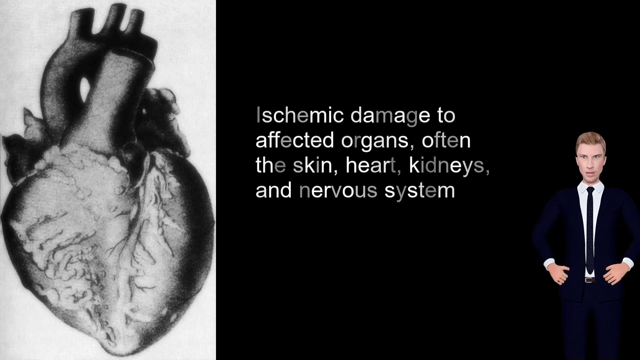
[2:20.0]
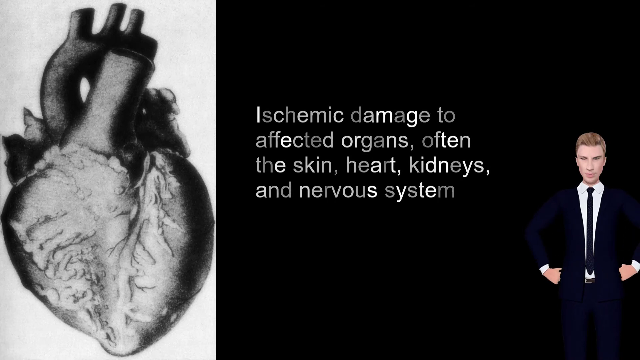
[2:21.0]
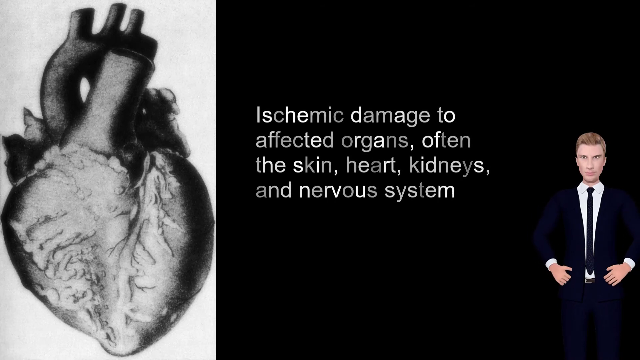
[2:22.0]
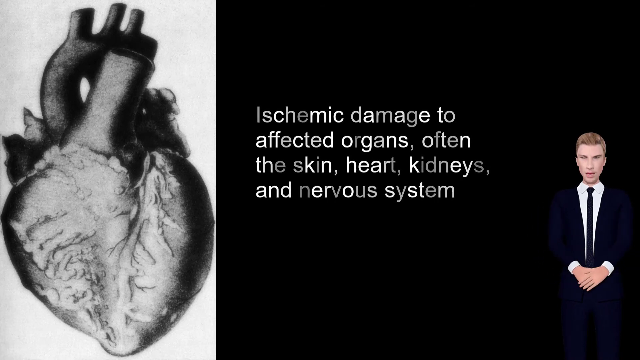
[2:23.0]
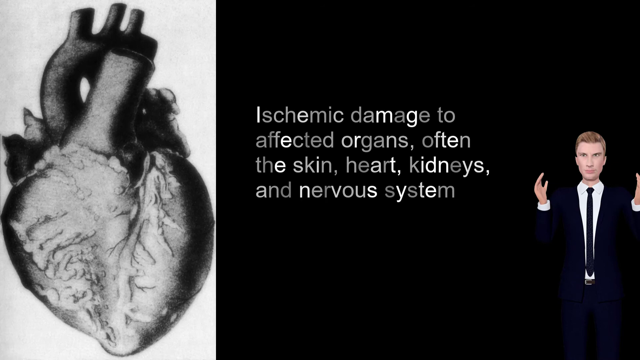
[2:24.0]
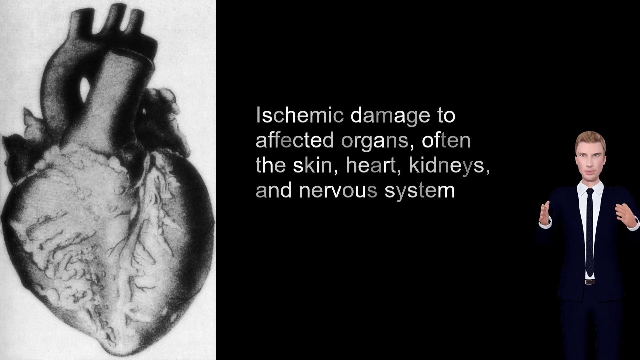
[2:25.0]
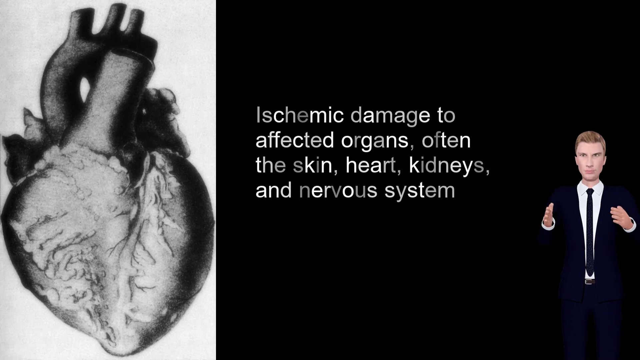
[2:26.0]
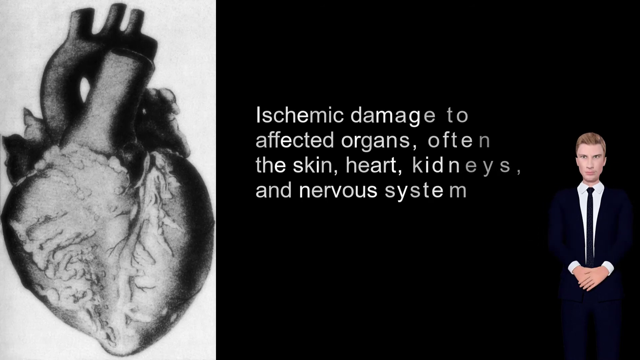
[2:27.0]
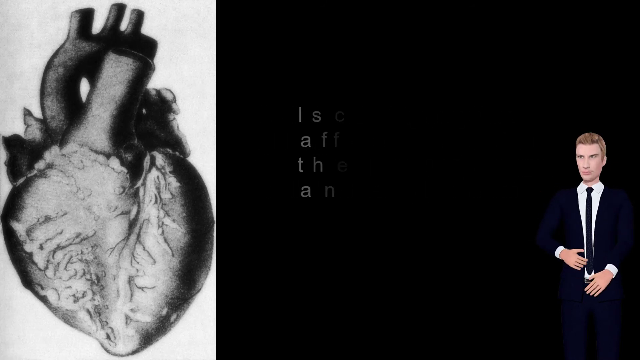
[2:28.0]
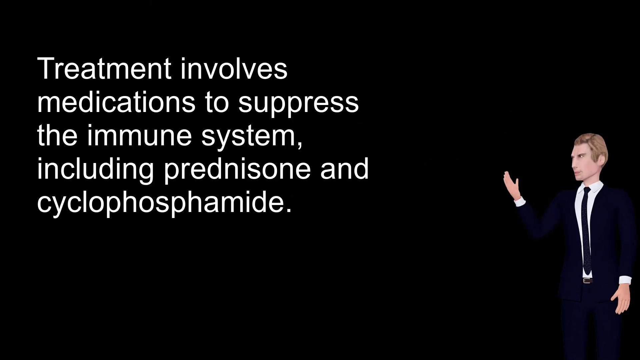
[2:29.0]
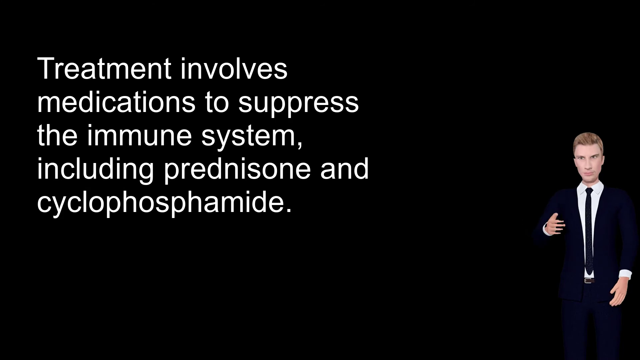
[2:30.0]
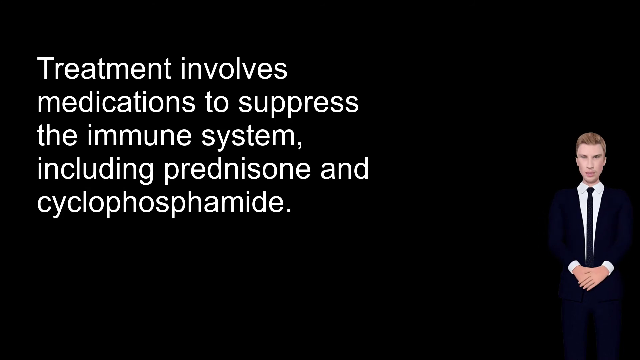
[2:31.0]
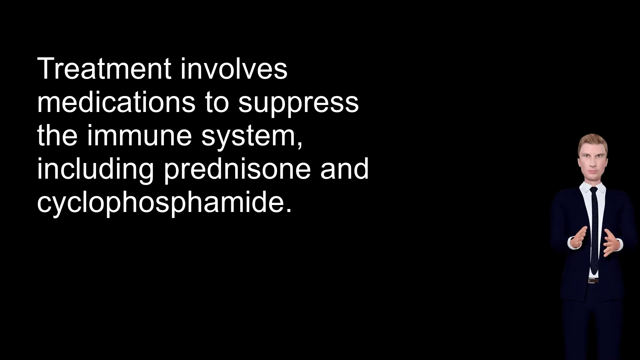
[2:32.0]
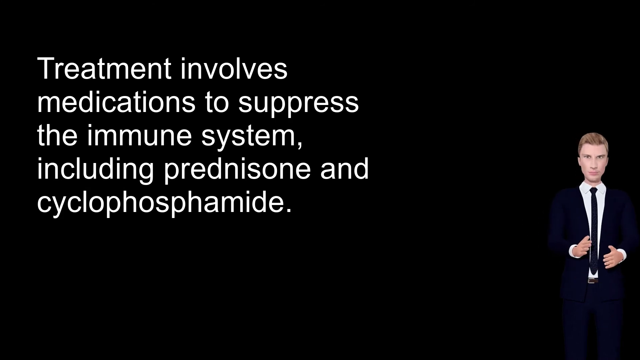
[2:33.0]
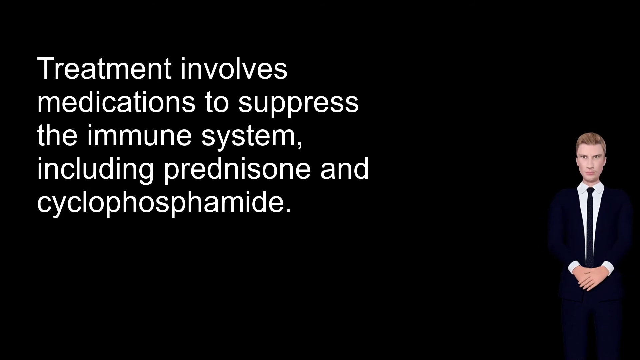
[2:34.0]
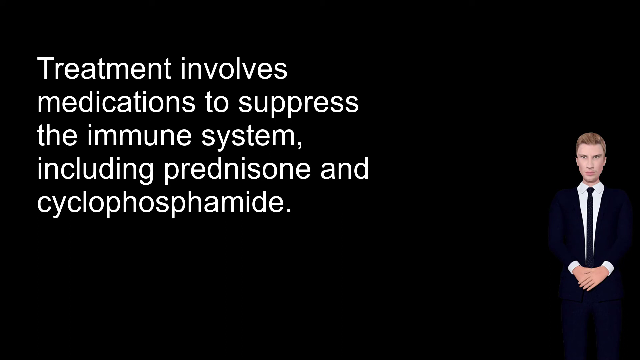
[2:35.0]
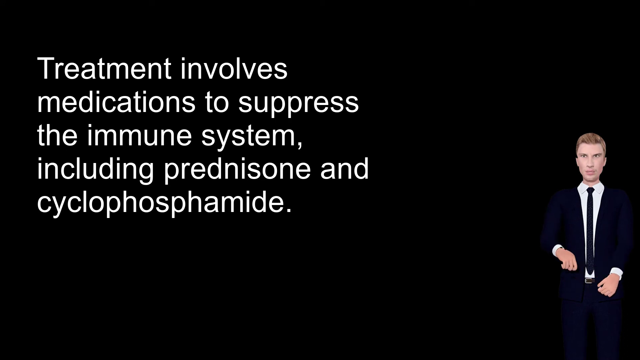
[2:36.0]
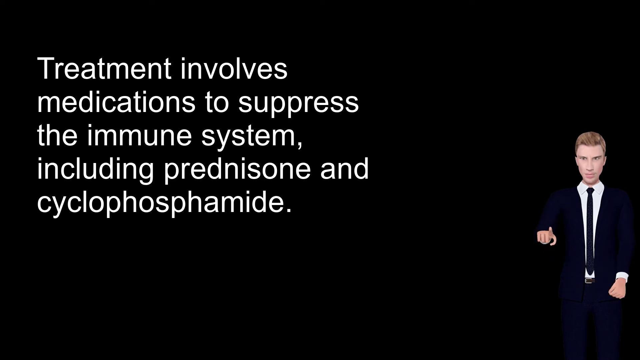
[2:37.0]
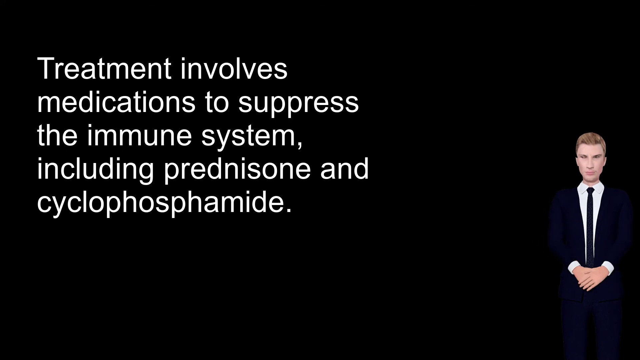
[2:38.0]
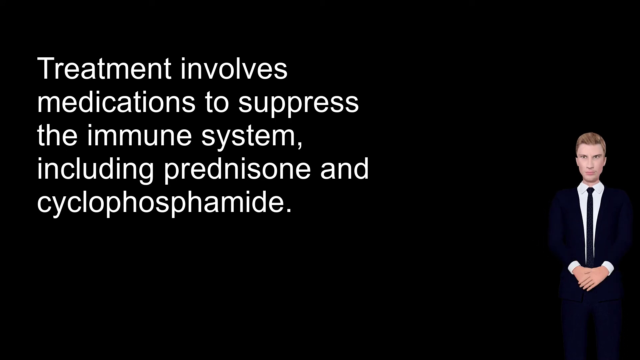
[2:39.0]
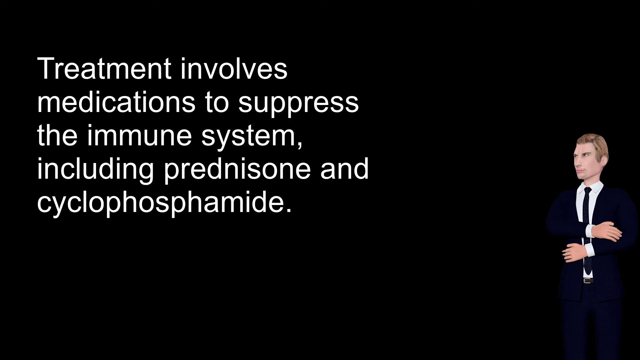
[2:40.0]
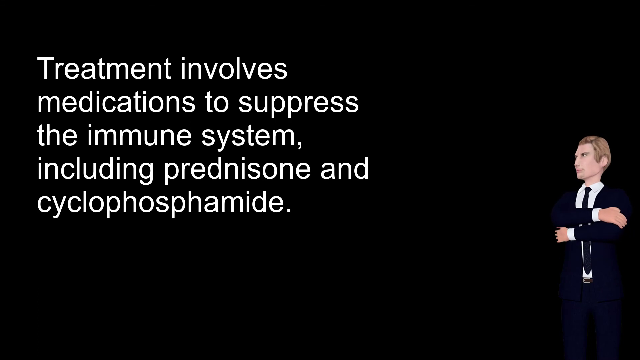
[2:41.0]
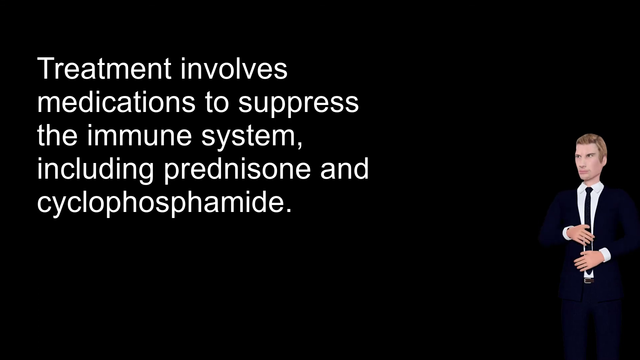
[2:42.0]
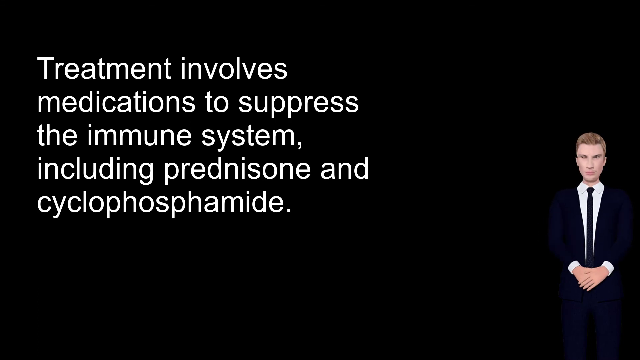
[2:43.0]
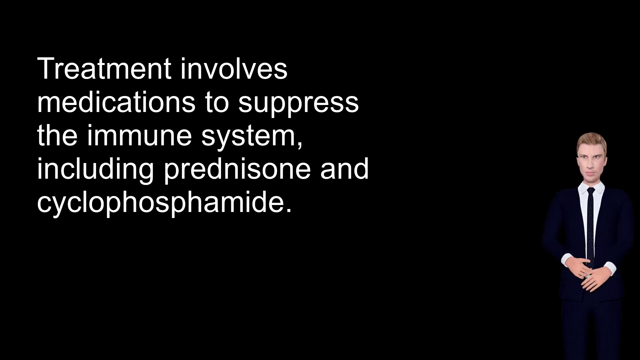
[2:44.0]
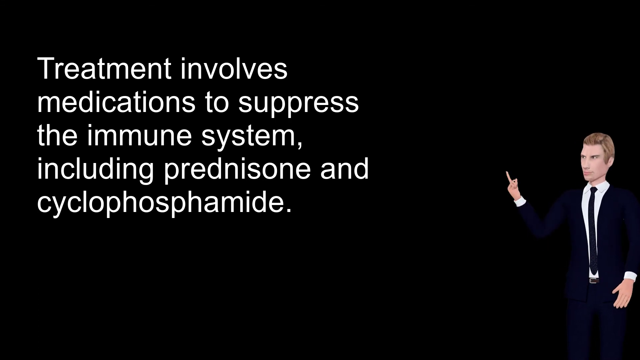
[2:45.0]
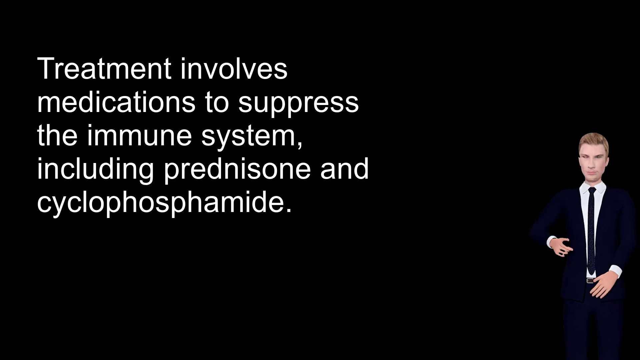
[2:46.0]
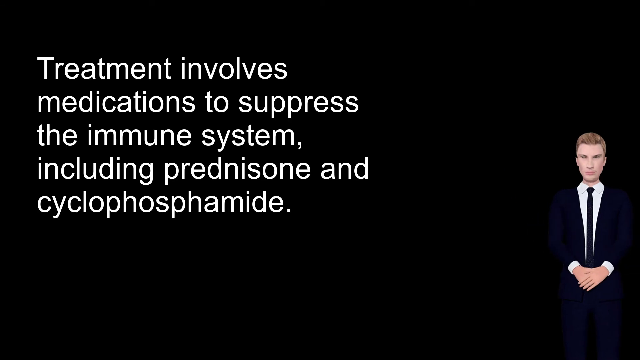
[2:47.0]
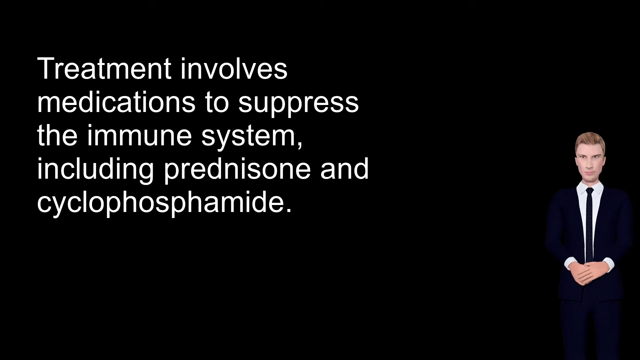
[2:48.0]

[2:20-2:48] A heart is on the left section of the screen, and the right section is black with white text over it, reading "treatment involves medication to suppress the immune system, including prednisone and" another drug. A 3D figurine in the bottom right corner appears to be presenting the information.